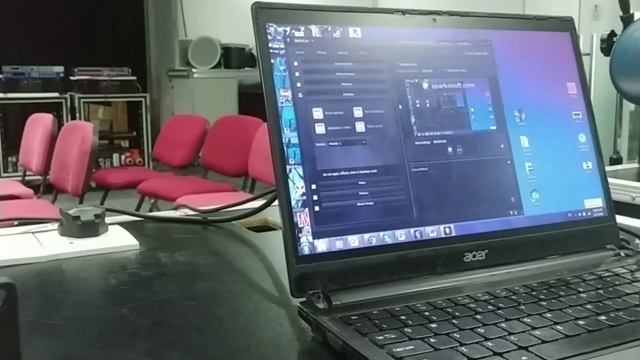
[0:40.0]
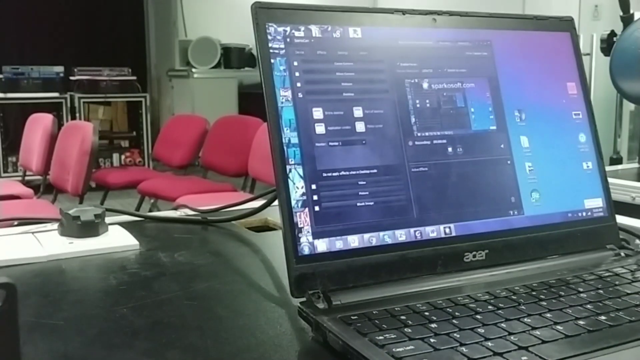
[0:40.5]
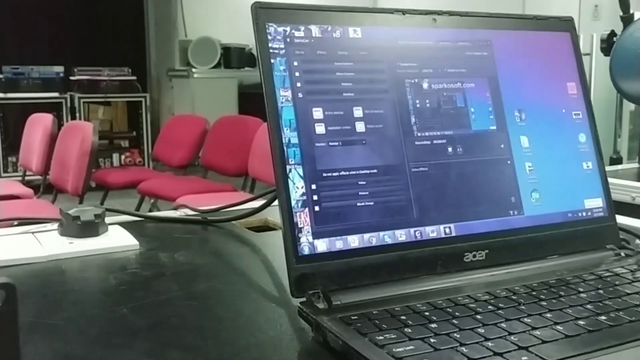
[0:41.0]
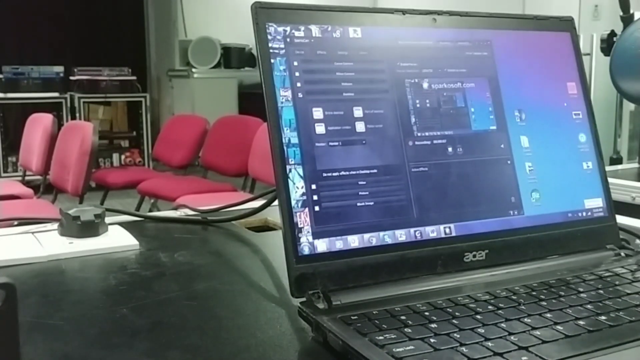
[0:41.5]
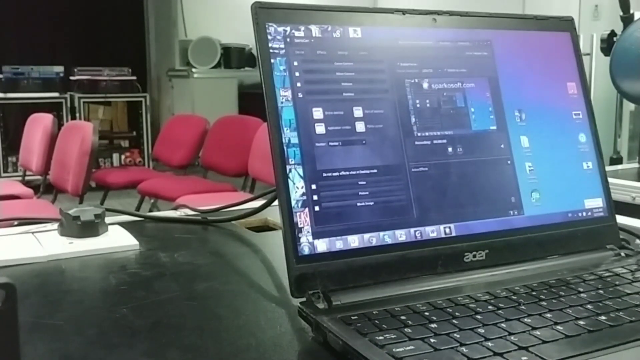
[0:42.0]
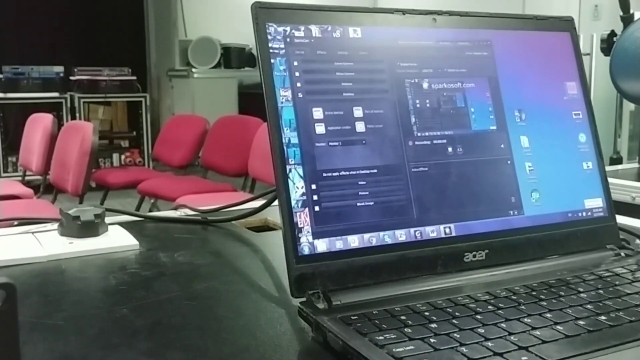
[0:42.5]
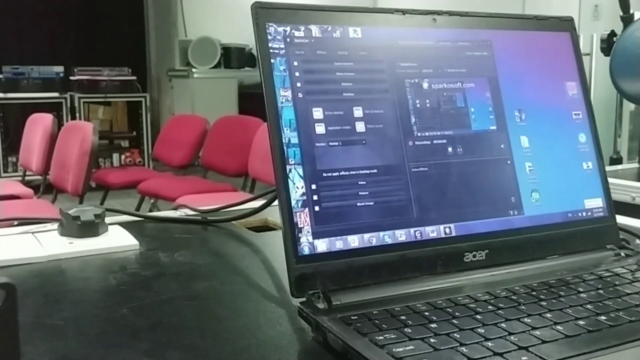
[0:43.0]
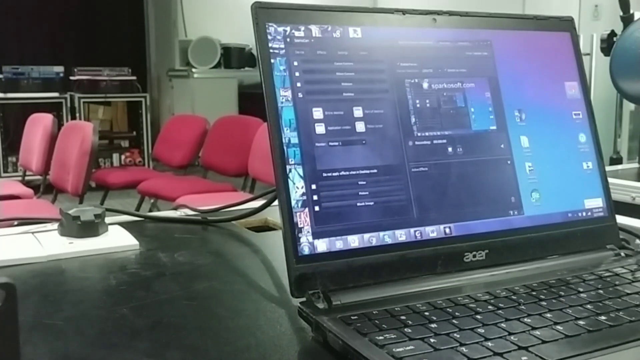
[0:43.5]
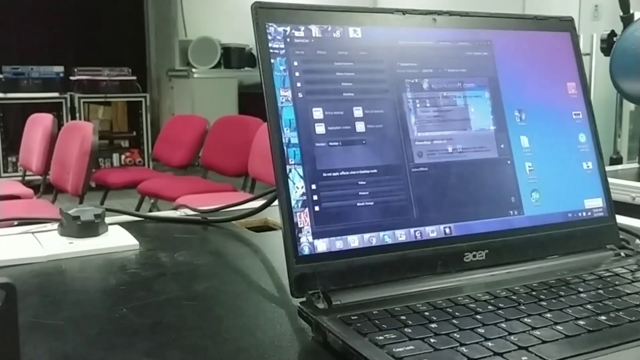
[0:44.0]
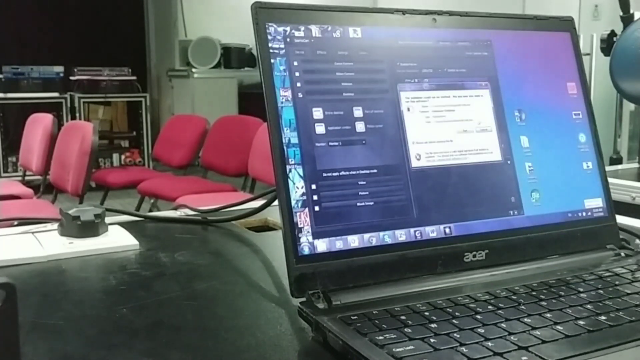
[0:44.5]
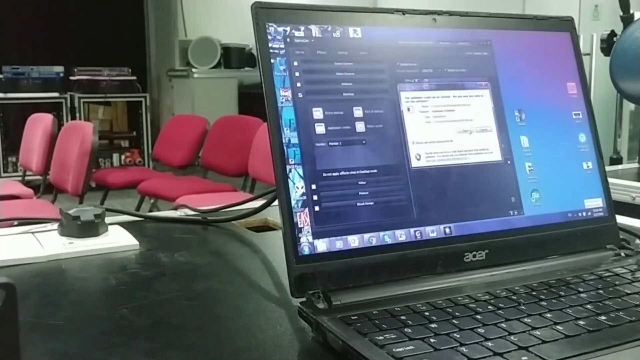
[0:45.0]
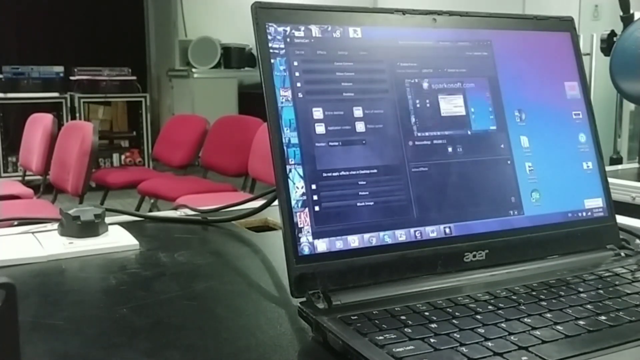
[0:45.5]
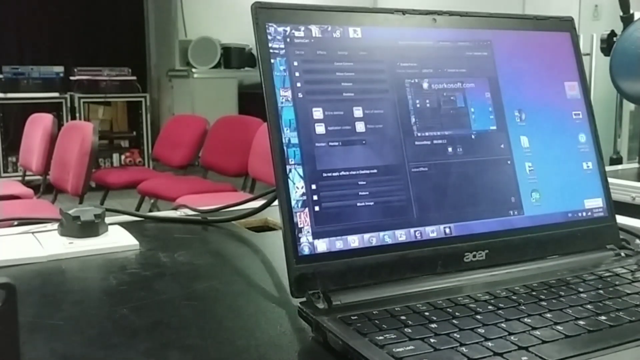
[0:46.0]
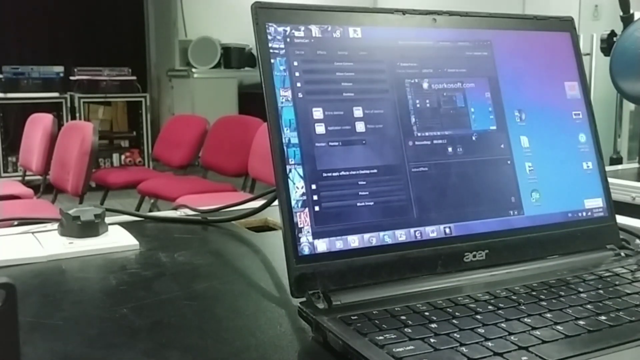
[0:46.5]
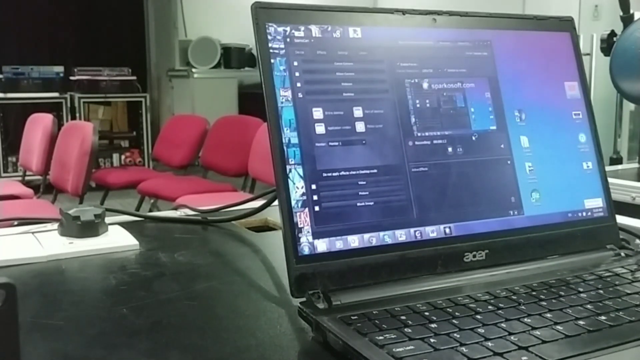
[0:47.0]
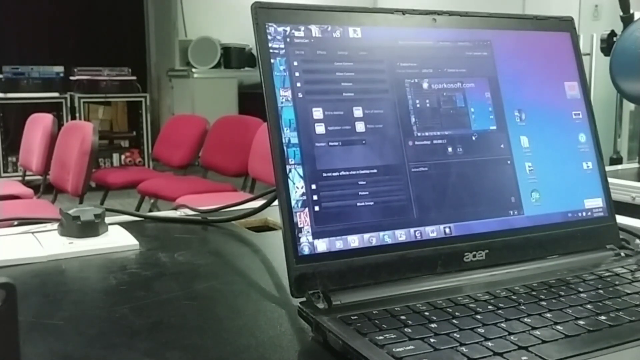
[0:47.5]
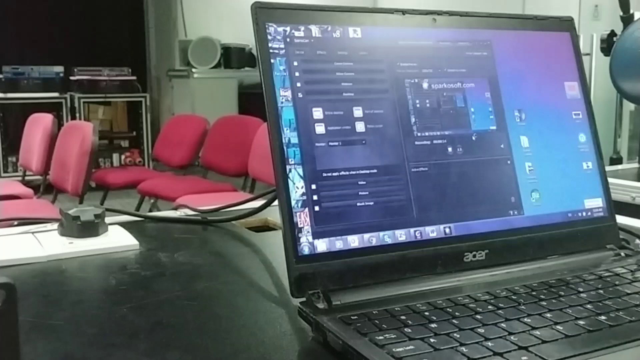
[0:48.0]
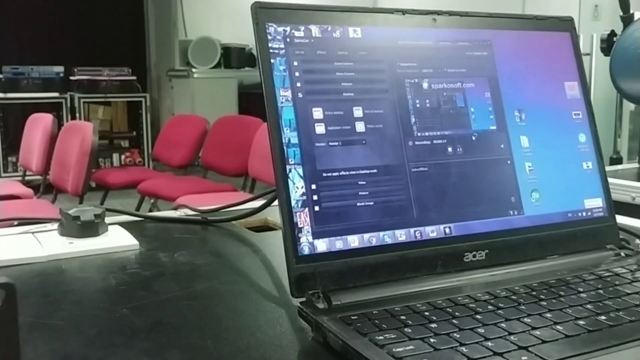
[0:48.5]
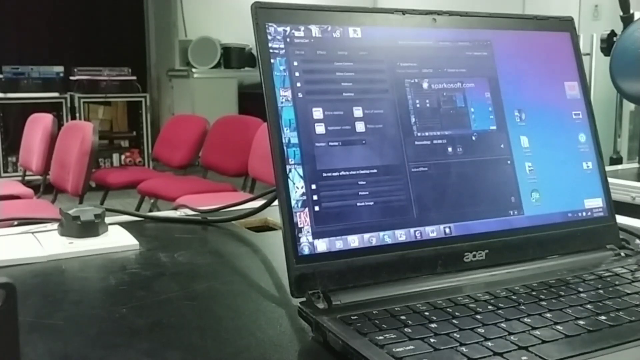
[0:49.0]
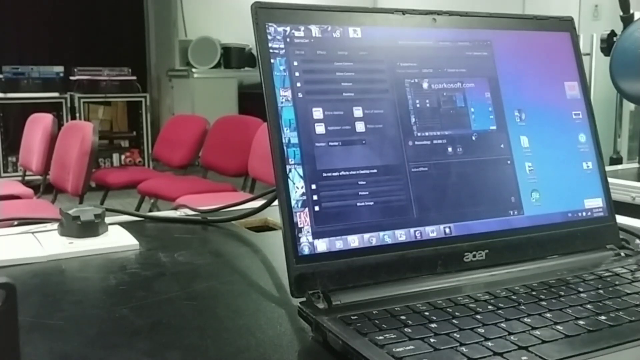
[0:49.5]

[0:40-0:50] A black Acer laptop is shown, with the brand clearly visible below the screen. Someone is working on the laptop in some sort of program: the desktop is visible, along with a window showing the program, and the mouse moves around. Two cords come out of the back of the laptop, which is on a black desk. Five pinkish-reddish chairs are set up in a row, and beyond them there appears to be more audio equipment in the background. The laptop's keyboard is in the foreground, but only the mouse is being moved on the screen.